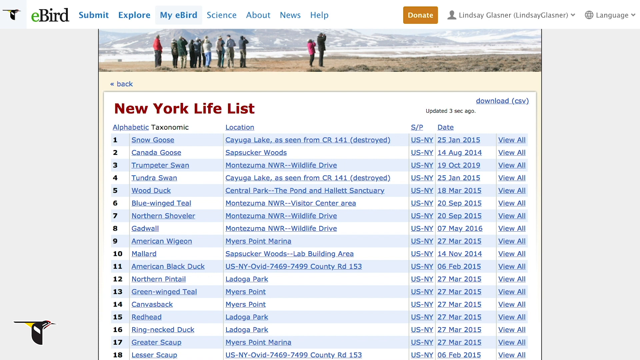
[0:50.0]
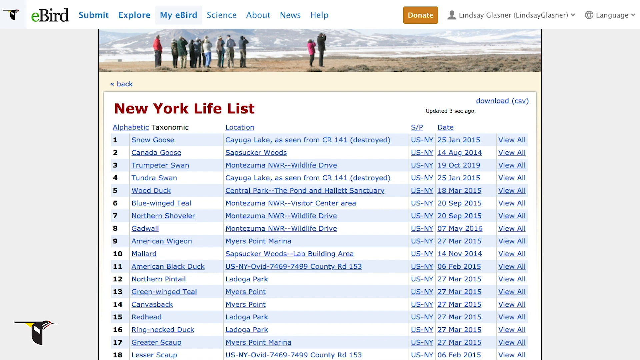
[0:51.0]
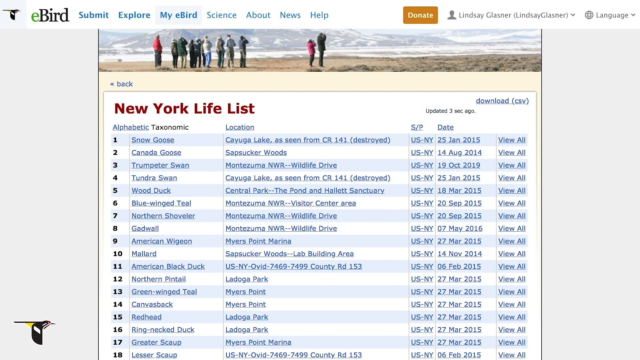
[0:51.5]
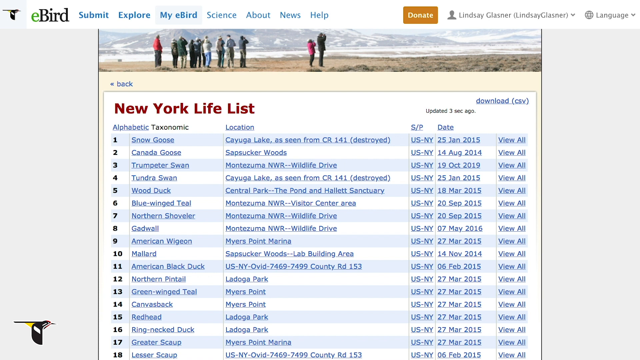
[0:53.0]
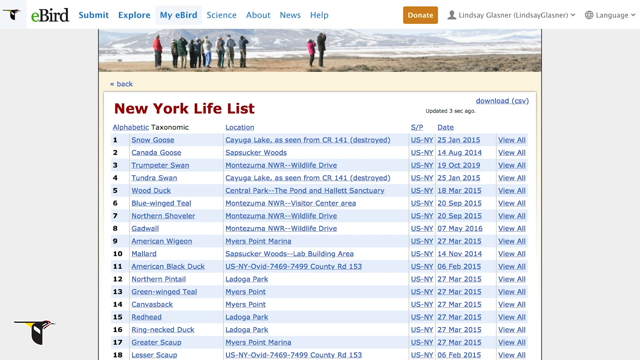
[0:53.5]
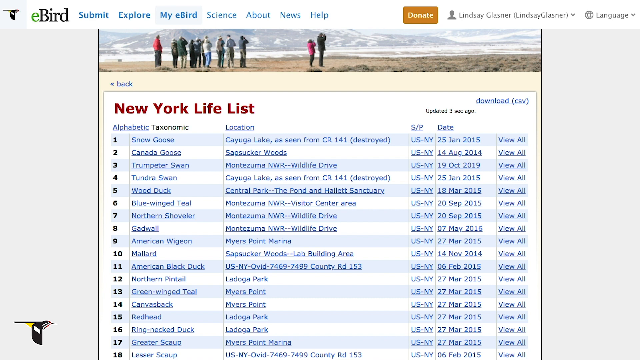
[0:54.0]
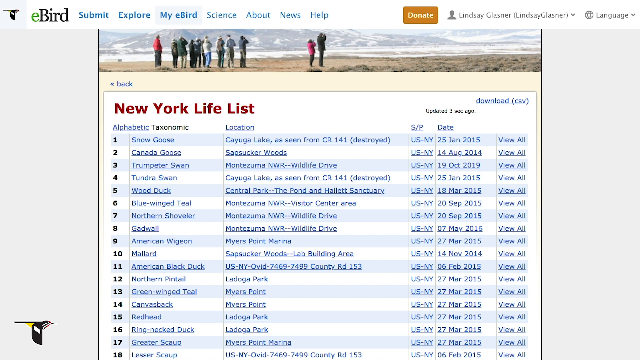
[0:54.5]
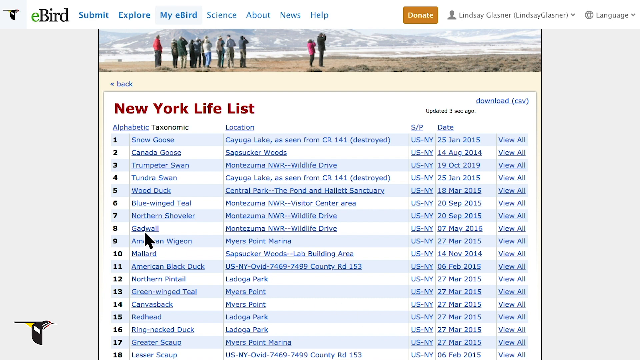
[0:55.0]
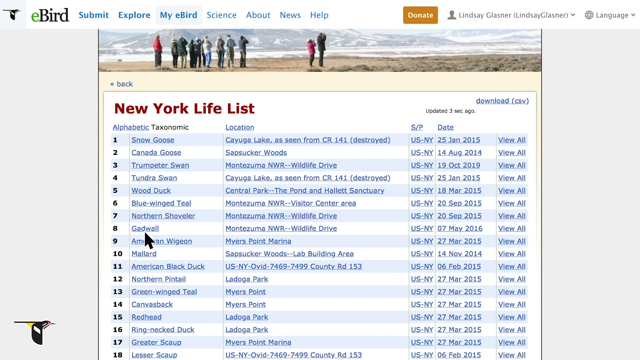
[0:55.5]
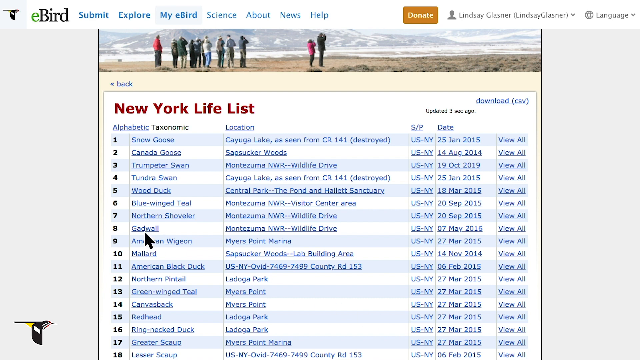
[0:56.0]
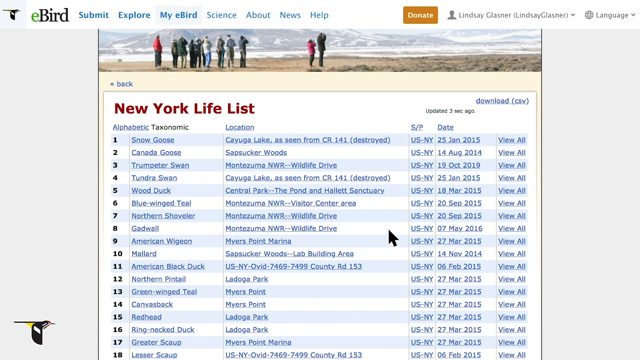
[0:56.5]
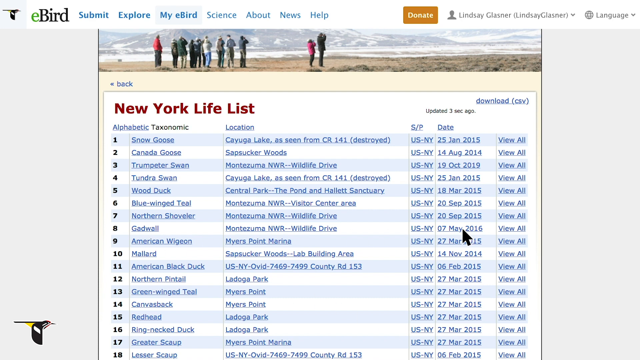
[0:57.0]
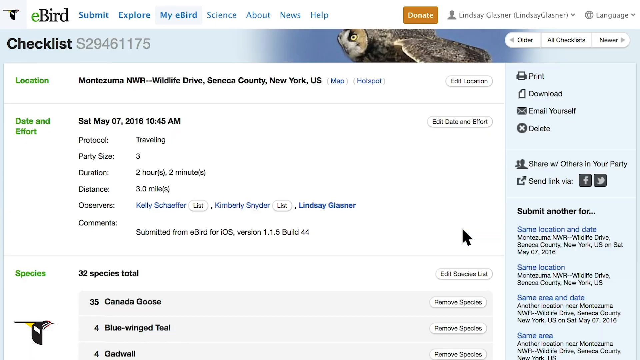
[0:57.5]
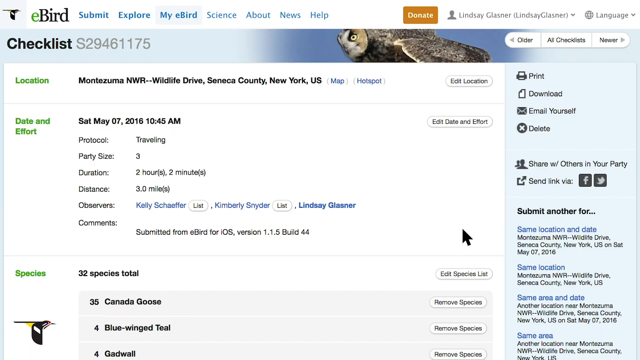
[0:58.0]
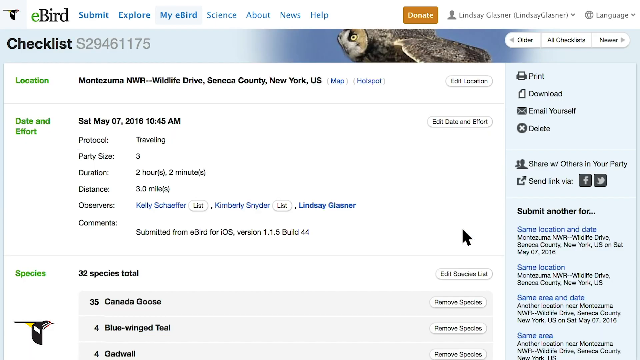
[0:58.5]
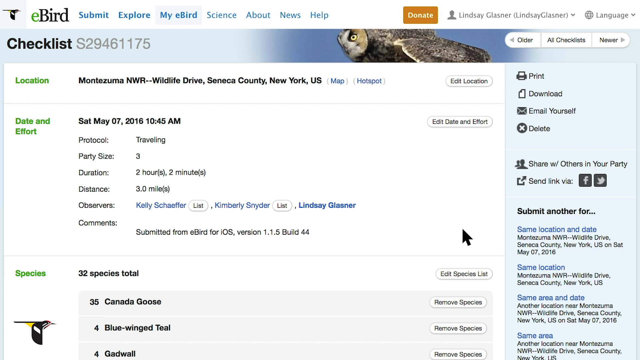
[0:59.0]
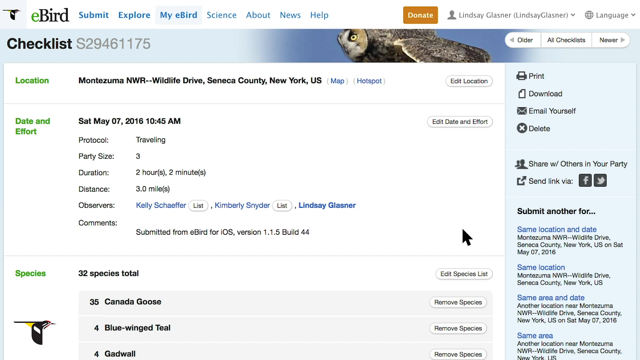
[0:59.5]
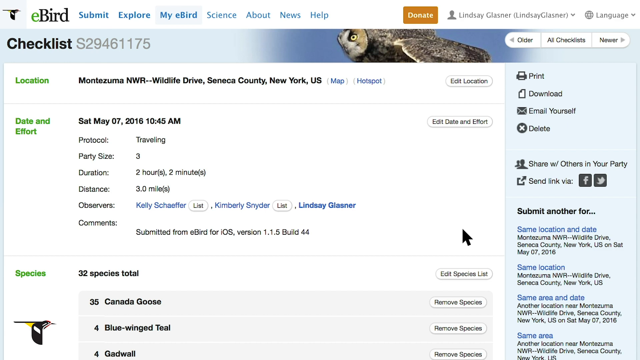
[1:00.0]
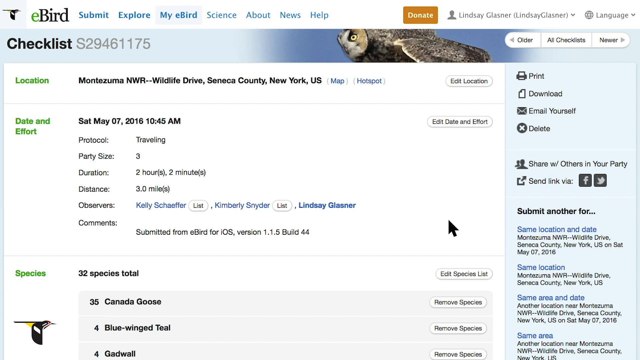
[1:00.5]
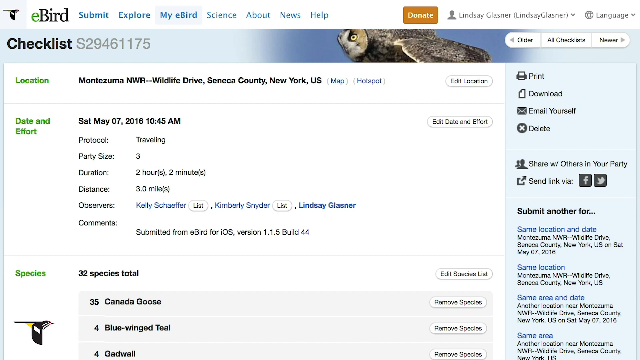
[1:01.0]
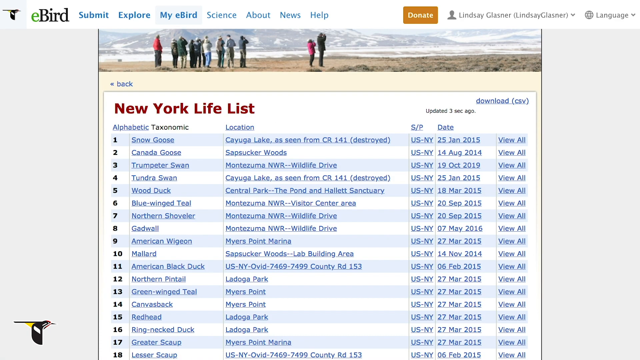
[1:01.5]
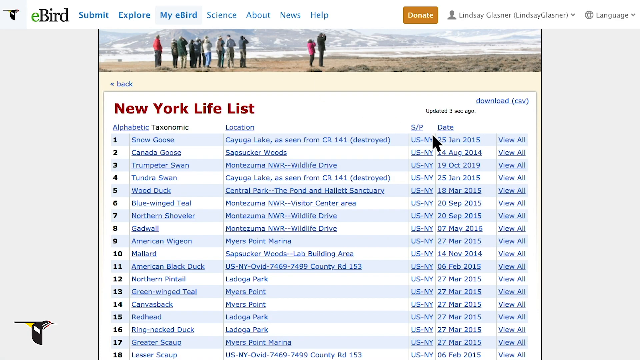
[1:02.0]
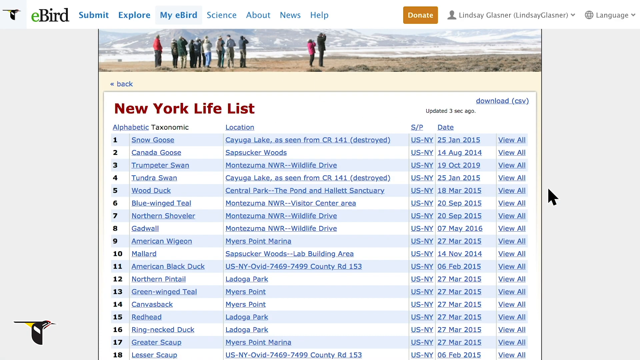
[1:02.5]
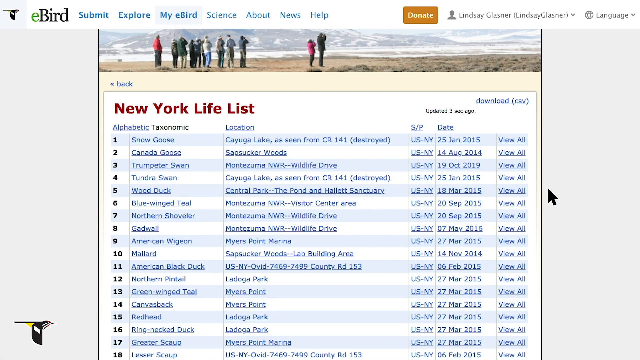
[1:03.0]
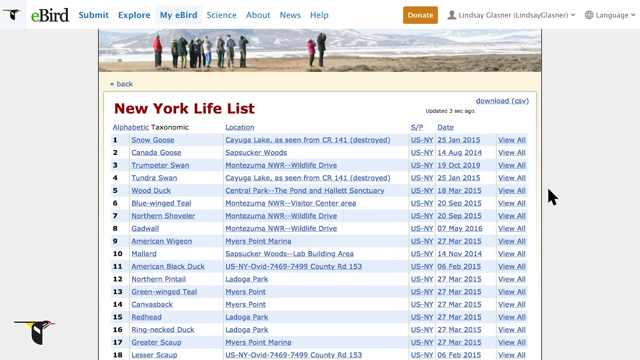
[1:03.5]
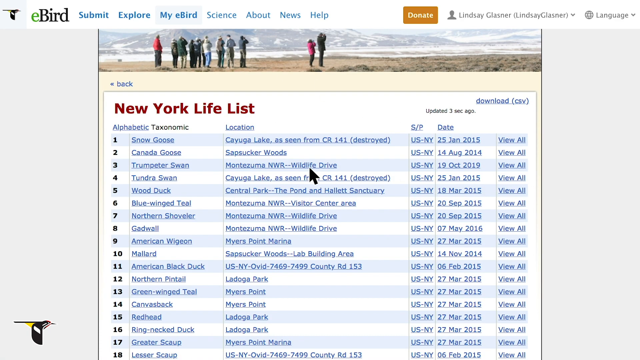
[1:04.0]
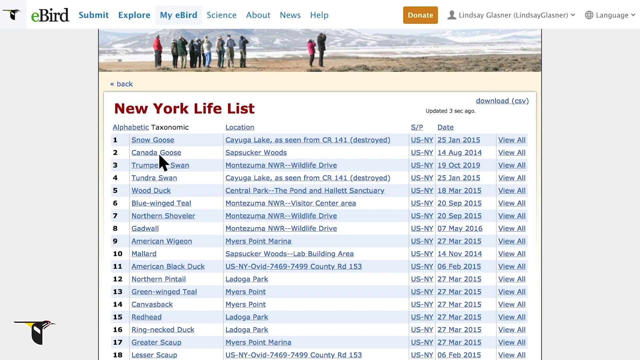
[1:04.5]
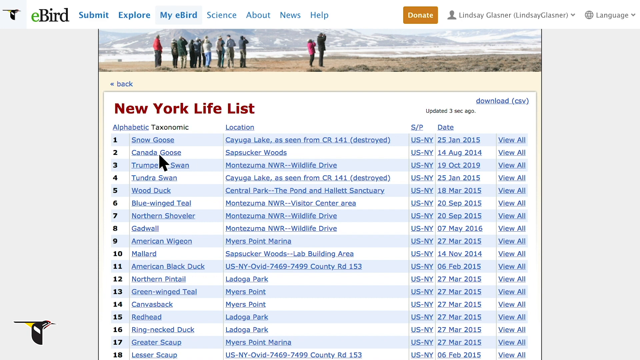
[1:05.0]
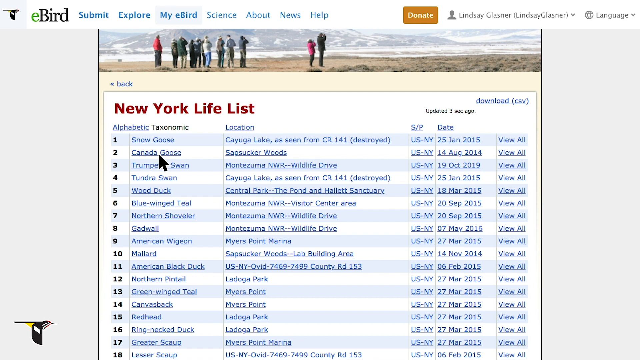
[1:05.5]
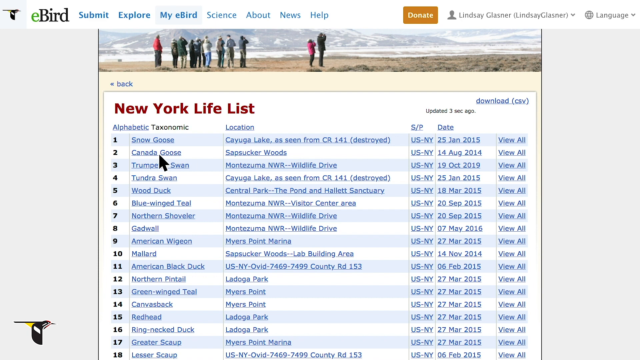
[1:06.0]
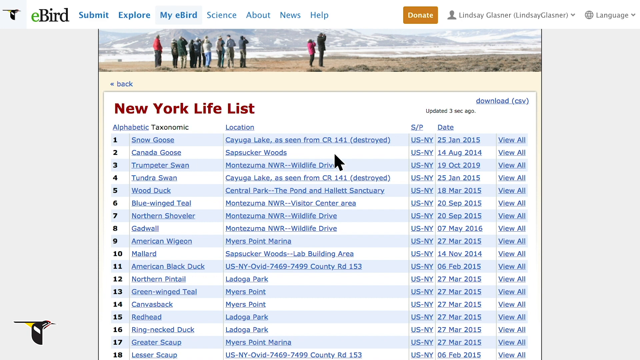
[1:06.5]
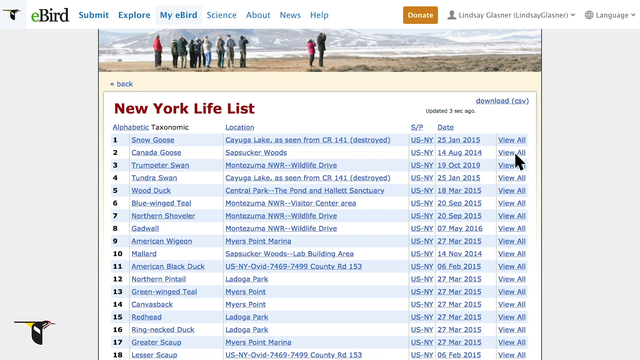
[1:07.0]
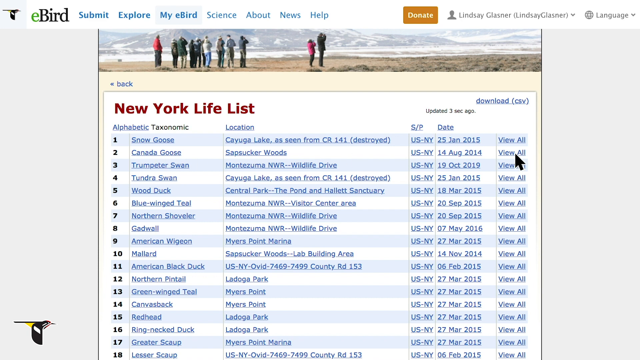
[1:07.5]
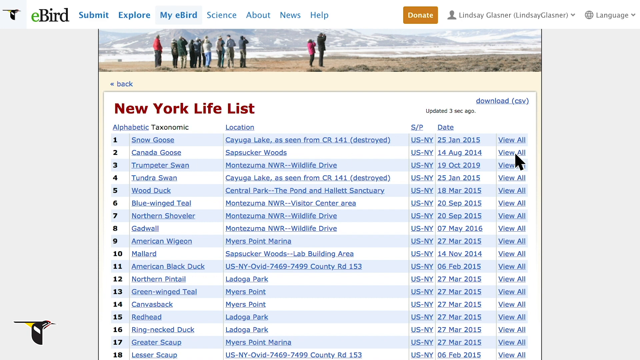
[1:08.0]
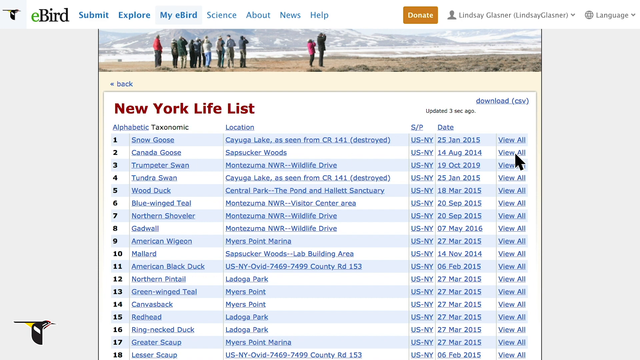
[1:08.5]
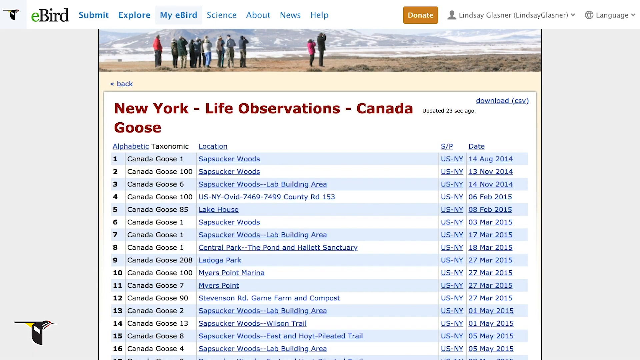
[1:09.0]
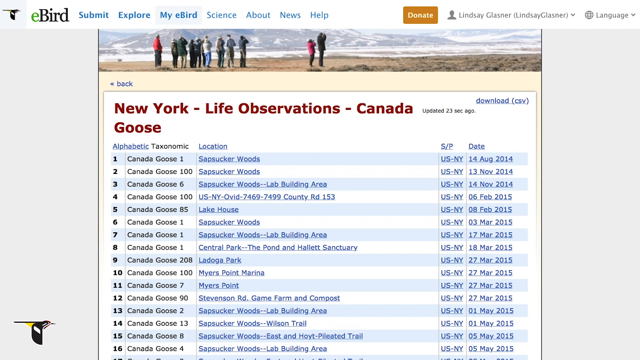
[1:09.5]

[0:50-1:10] The cursor goes to the eighth entry down, a bird called a gadwell, moves to the right and clicks on it. The page that opens shows a bird and links at the top. Beneath is "checklist" with a number beside it, then "location" in green with the location in black to its right, and below that "date and effort" with the date next to it. Below are seven different options with information to their right. Near the bottom left, "species" appears in green, with "32 species total" to its right and more information underneath. On the right side is a small blue-bordered area with print, download, email yourself and delete at the top, more information below, and Facebook and Twitter links. The view returns to the New York life list, the cursor goes up to Canada goose, moves over to "view all" and clicks it.